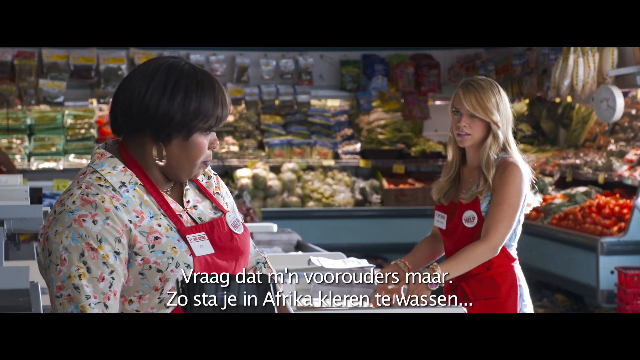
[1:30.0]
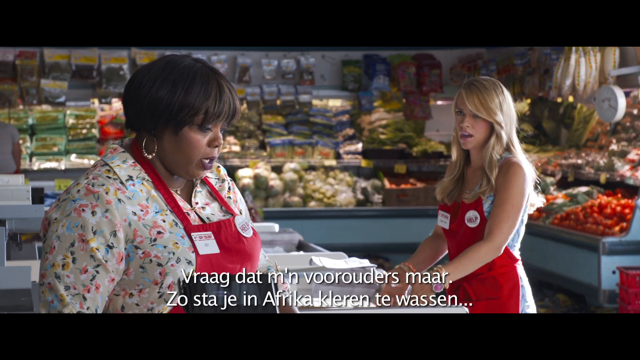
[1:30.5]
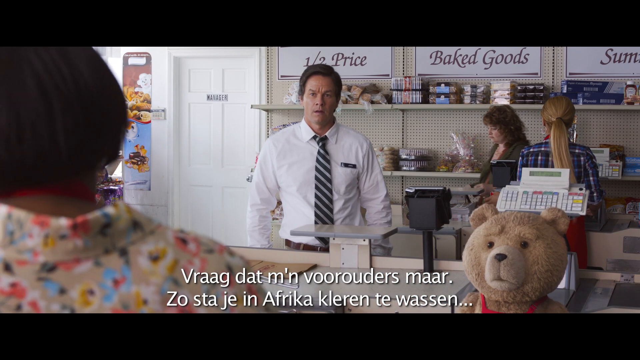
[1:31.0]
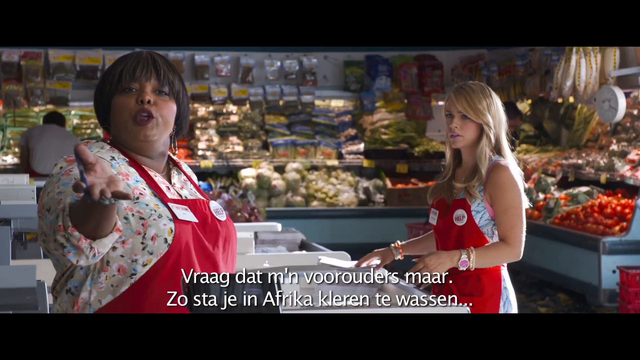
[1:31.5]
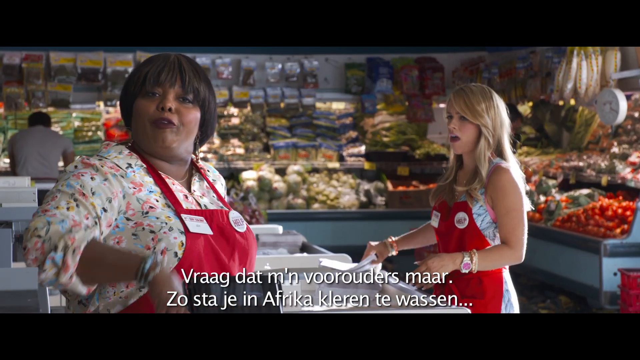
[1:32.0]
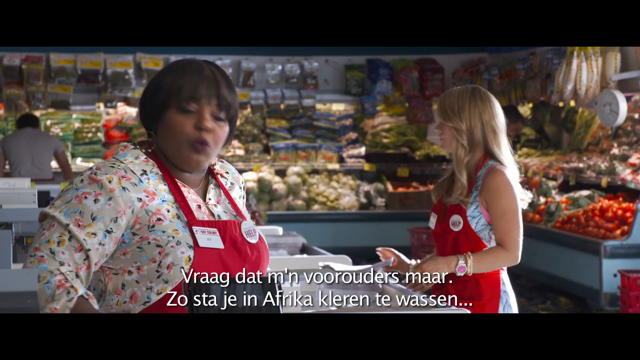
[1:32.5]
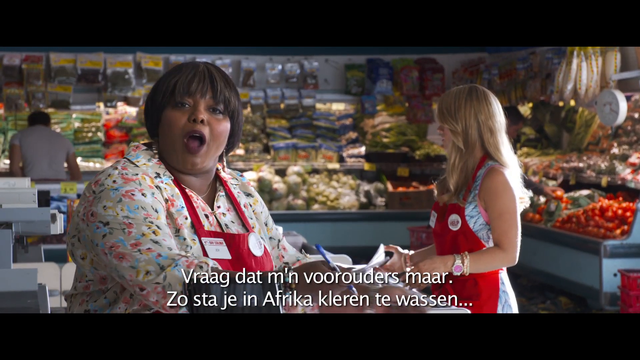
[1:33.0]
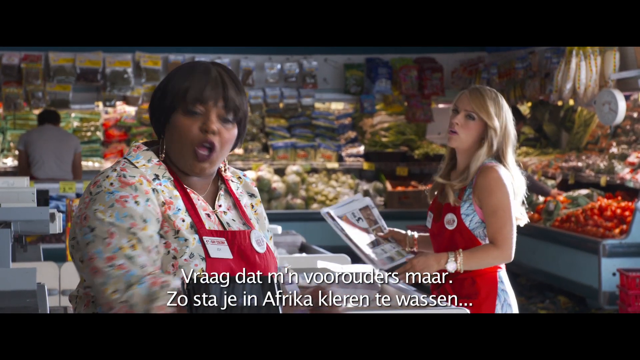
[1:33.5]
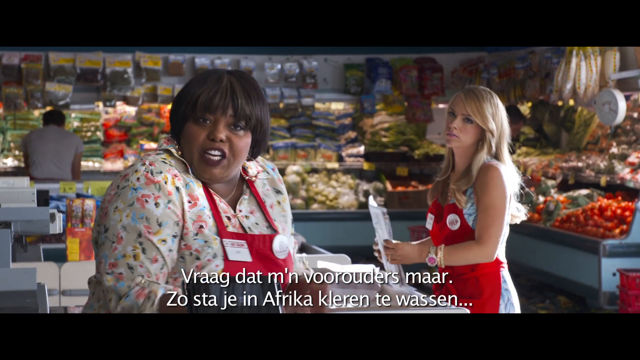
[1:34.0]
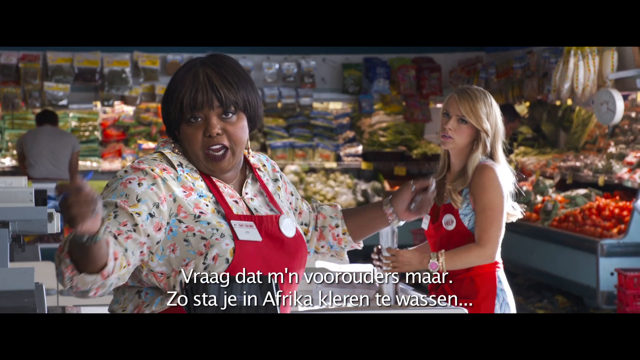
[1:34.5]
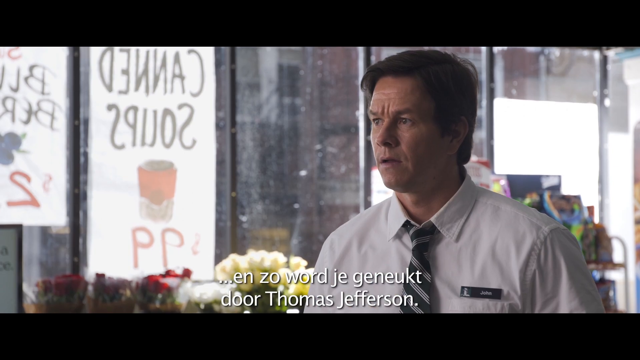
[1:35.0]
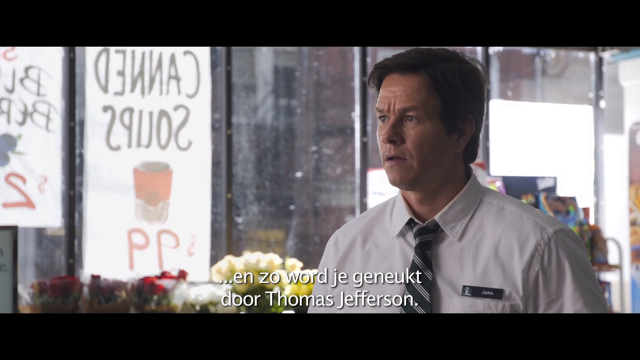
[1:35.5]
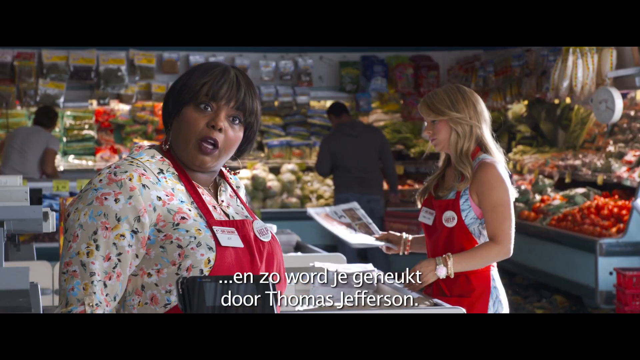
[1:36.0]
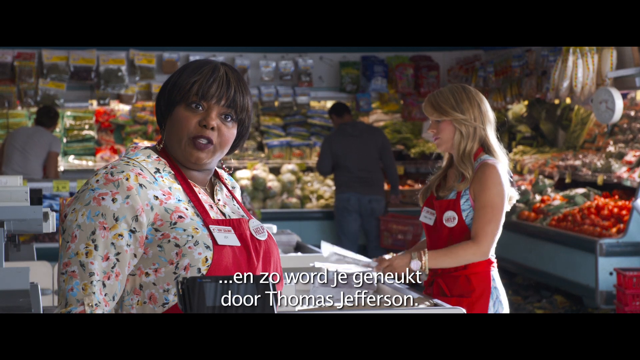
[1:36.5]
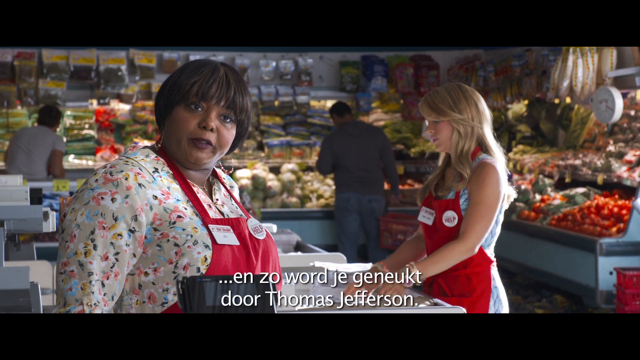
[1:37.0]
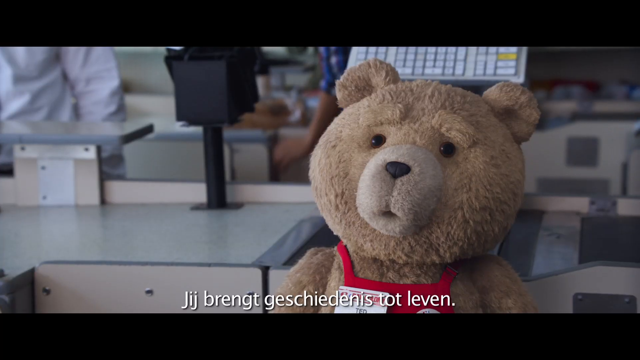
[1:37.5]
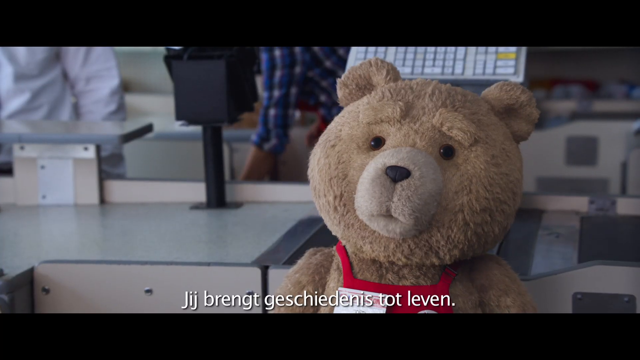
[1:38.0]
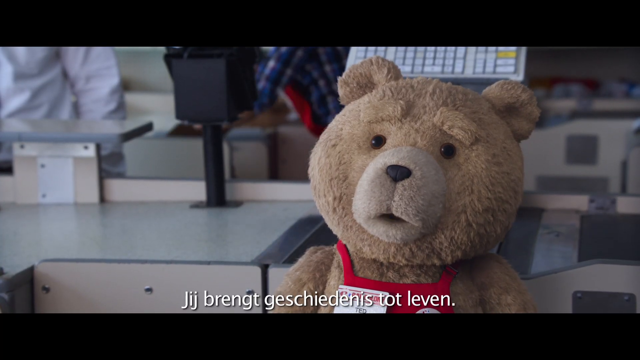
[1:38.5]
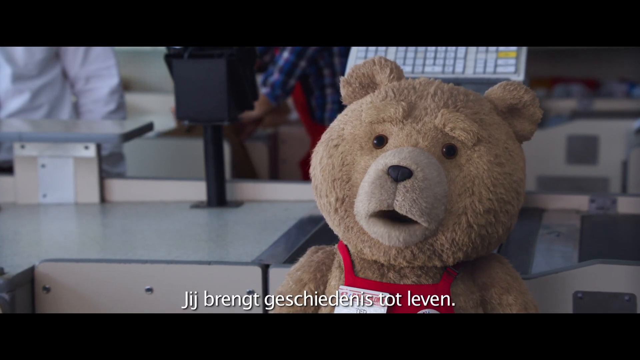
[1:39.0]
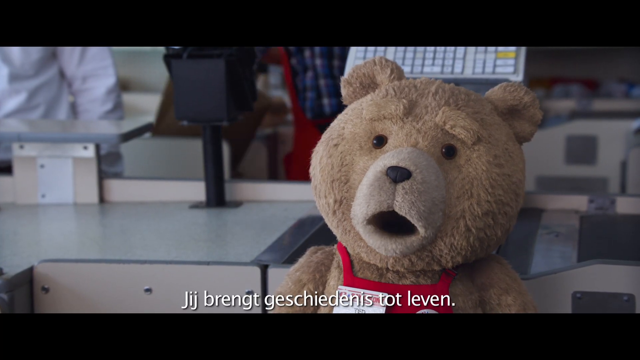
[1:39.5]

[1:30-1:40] Another co-worker stands to the left of the blonde woman: a large Black woman in a red apron and a pastel multicolored floral print top, with short black hair in a straight bob to her ears and gold hoop earrings. She talks to the woman on the right, who wears lots of watches and gold bracelets on each wrist. Both look at the camera, talking to Mark Wahlberg. The view shifts to his perspective, then goes back and forth between him, the women and the teddy bear, each talking when on camera. Behind the two women is the store's fruit and produce section, and in shots of Mark Wahlberg, many windows with signs on them are visible at the front of the grocery store.